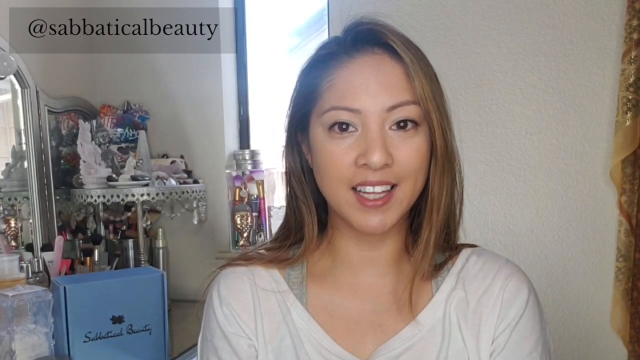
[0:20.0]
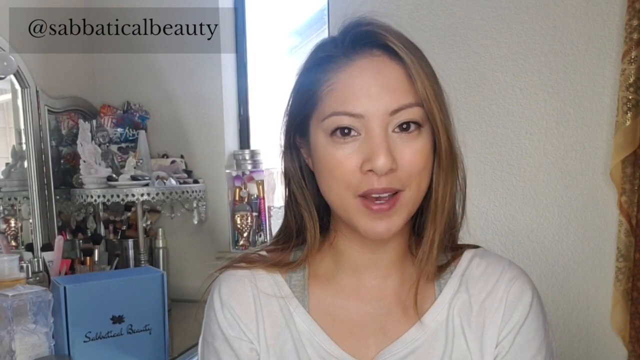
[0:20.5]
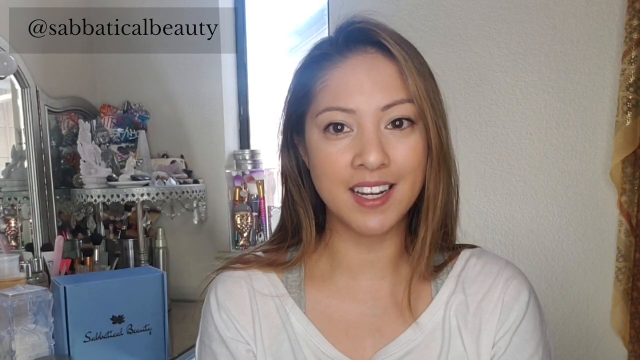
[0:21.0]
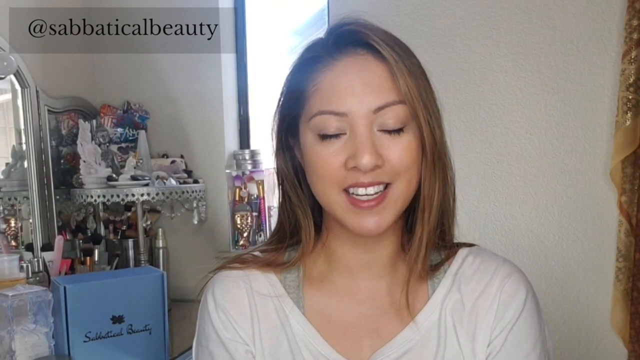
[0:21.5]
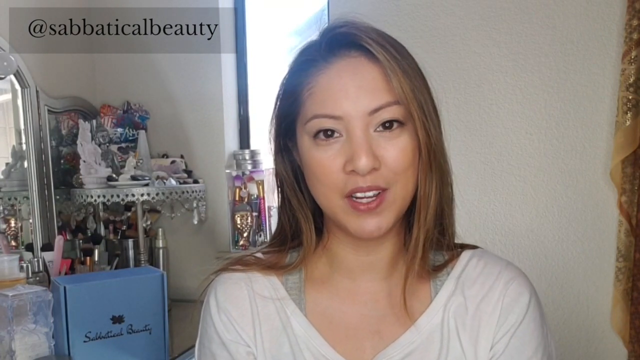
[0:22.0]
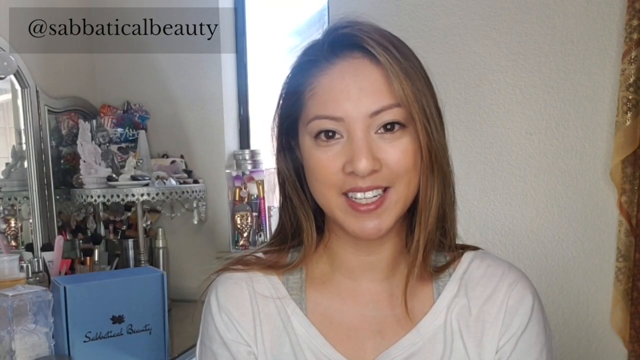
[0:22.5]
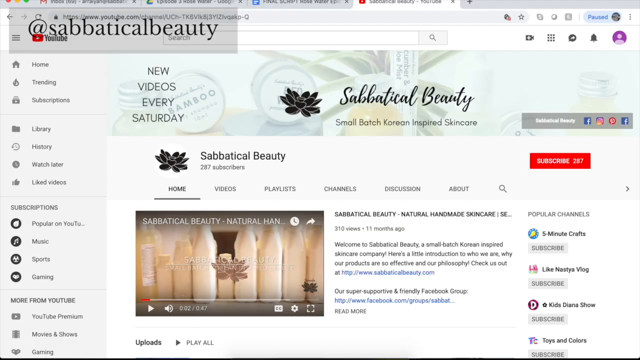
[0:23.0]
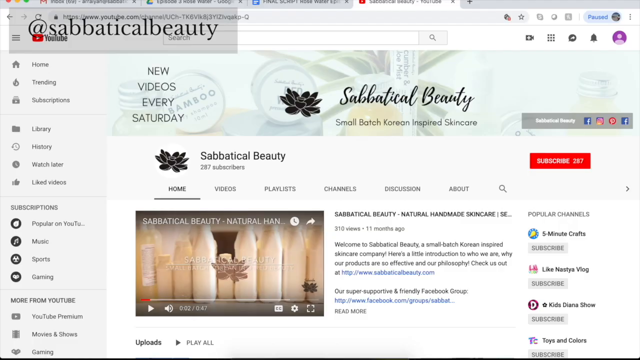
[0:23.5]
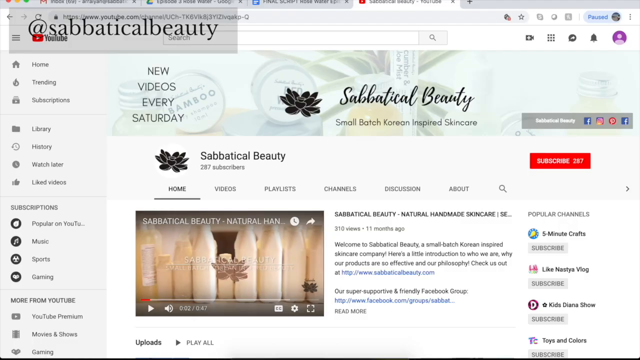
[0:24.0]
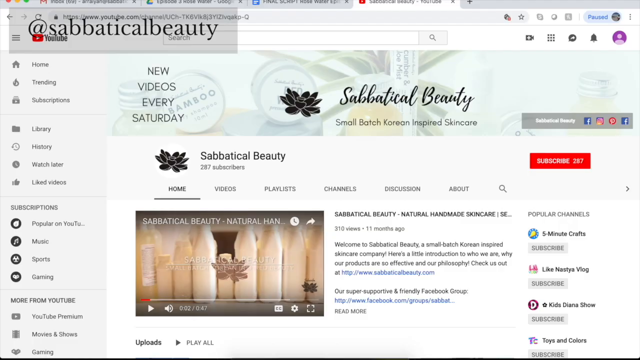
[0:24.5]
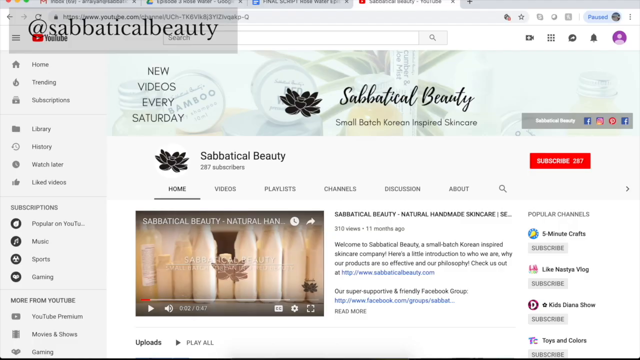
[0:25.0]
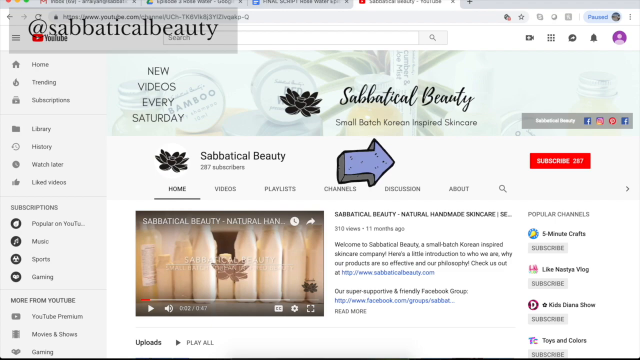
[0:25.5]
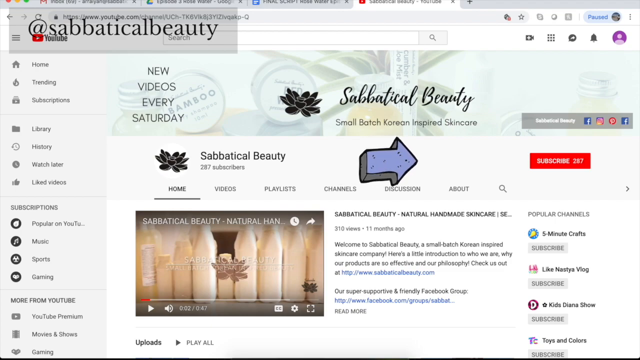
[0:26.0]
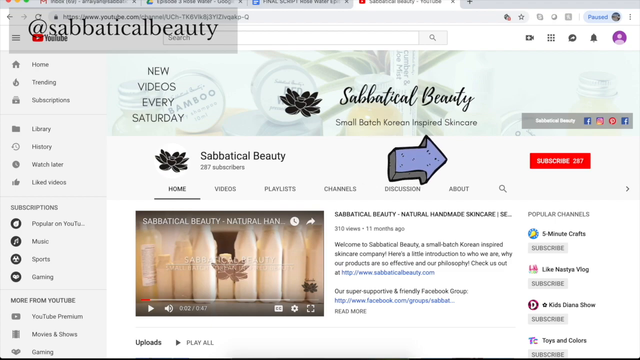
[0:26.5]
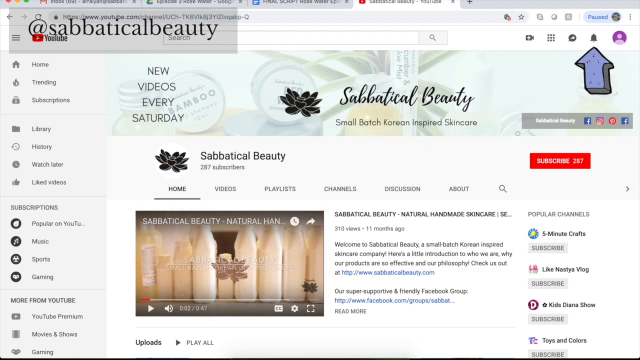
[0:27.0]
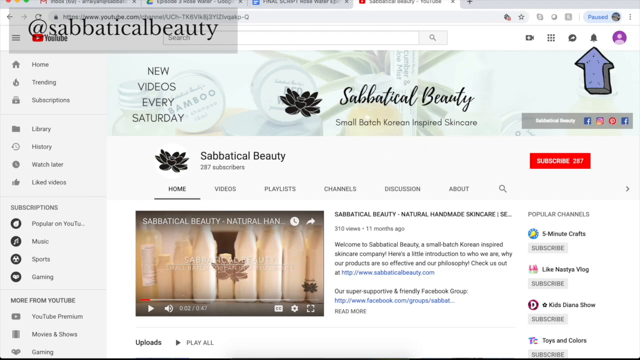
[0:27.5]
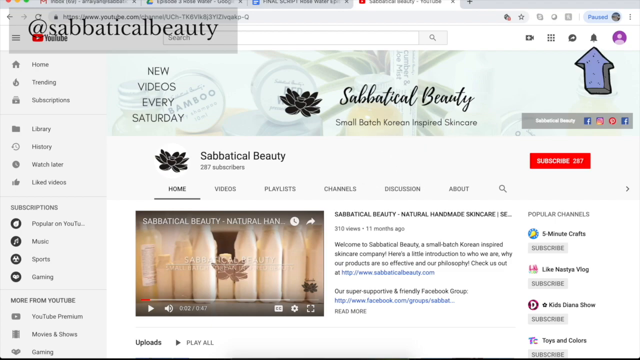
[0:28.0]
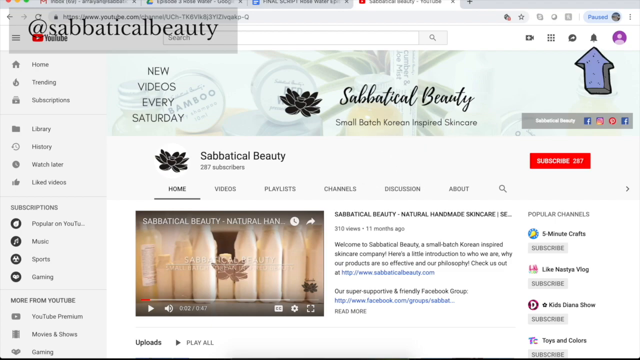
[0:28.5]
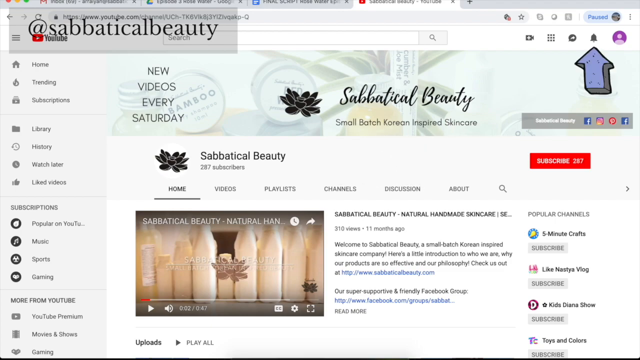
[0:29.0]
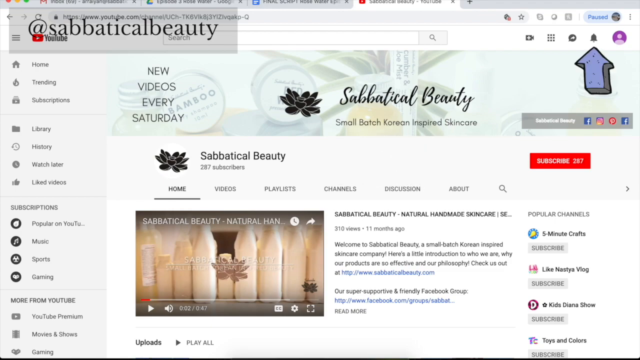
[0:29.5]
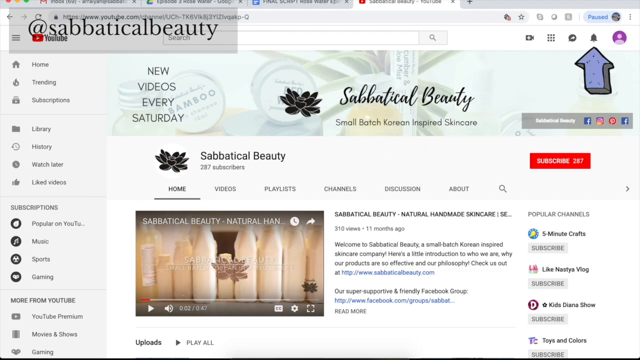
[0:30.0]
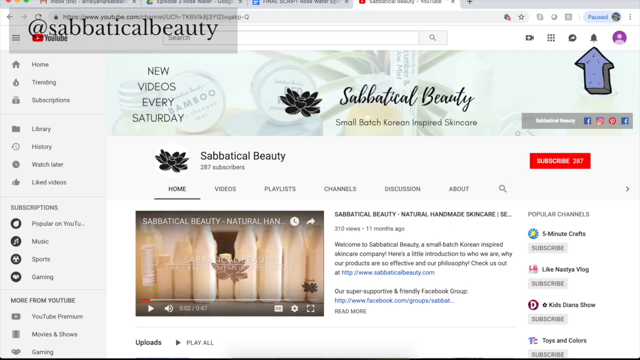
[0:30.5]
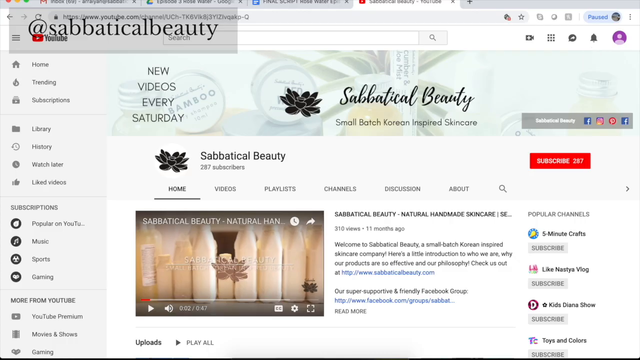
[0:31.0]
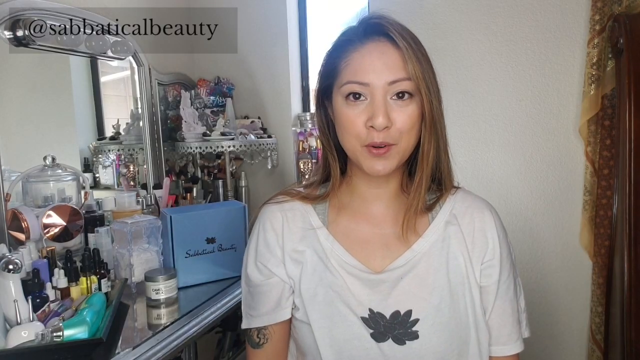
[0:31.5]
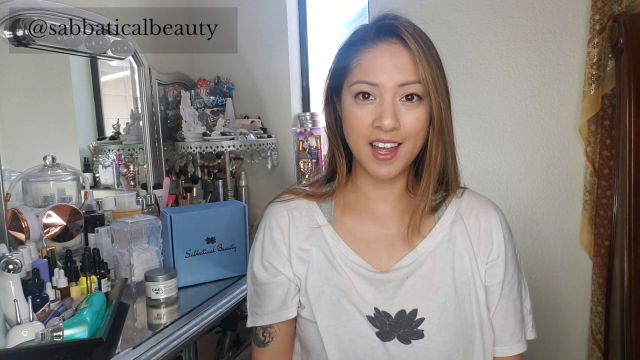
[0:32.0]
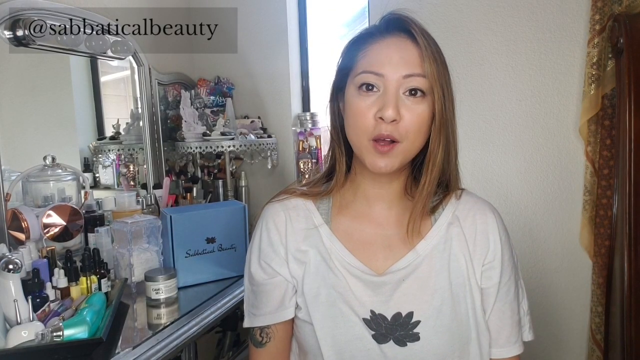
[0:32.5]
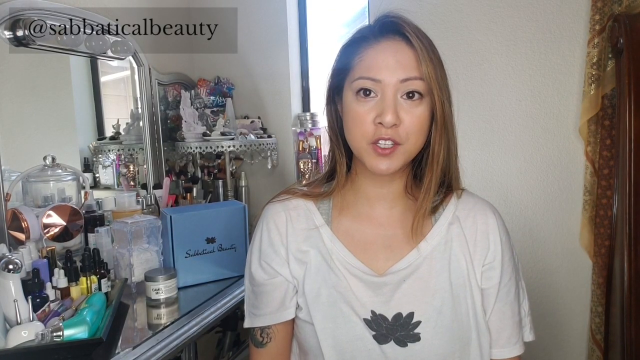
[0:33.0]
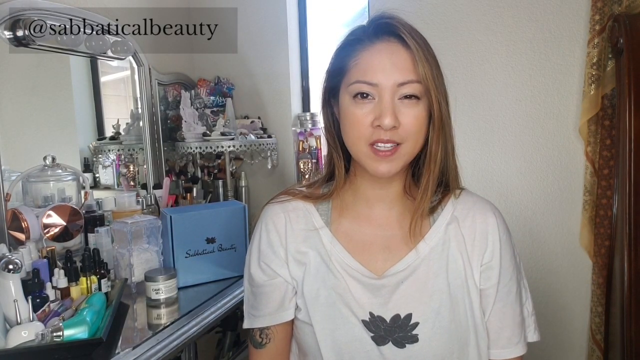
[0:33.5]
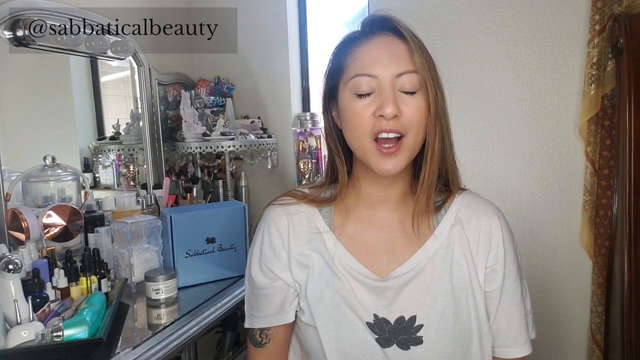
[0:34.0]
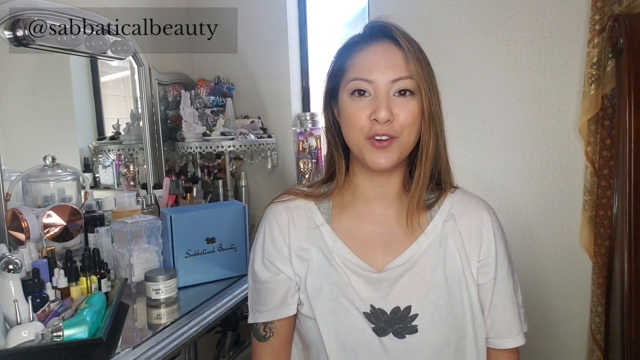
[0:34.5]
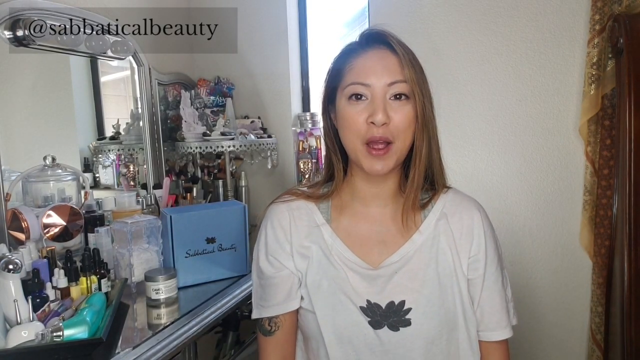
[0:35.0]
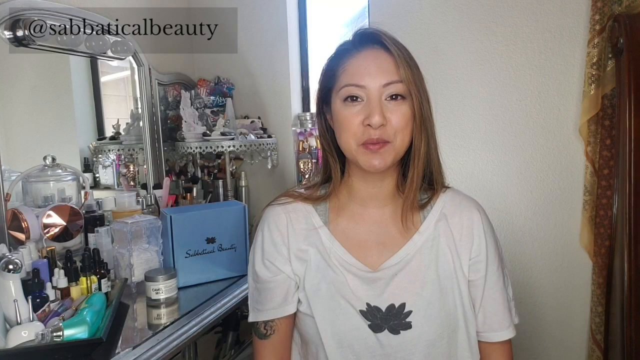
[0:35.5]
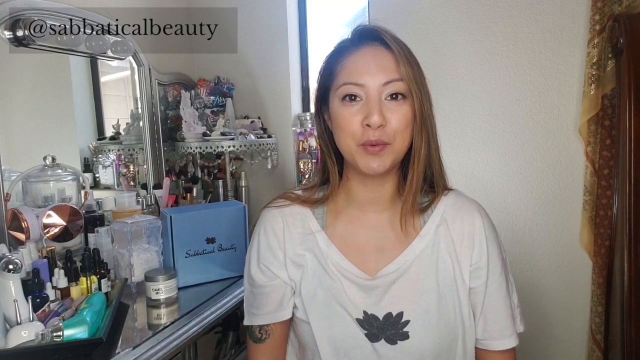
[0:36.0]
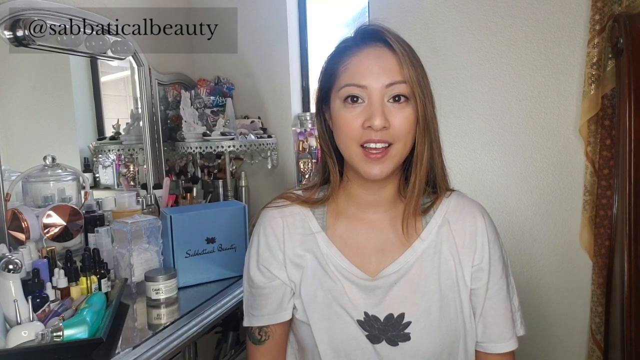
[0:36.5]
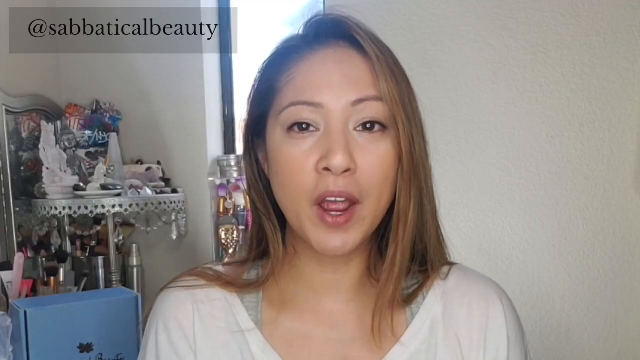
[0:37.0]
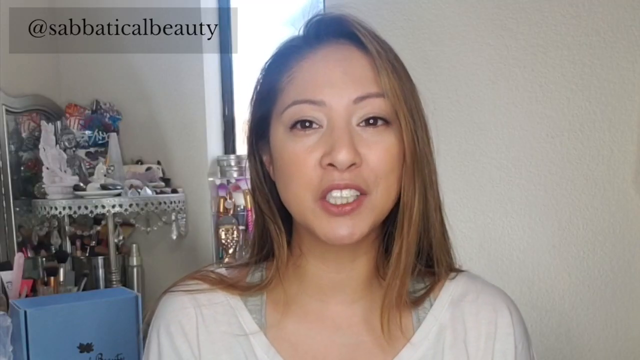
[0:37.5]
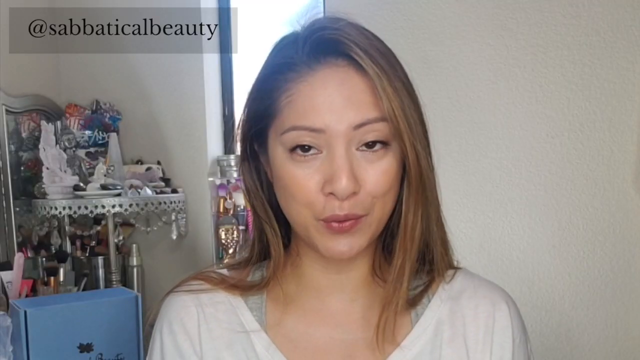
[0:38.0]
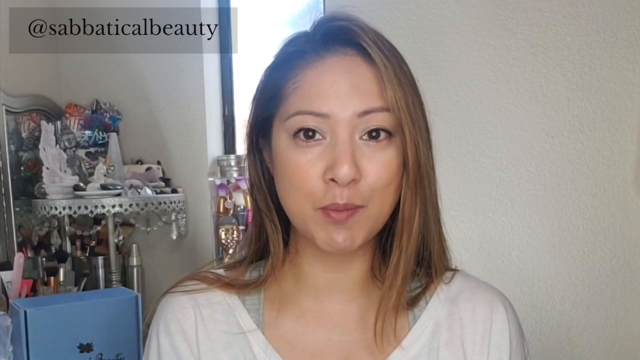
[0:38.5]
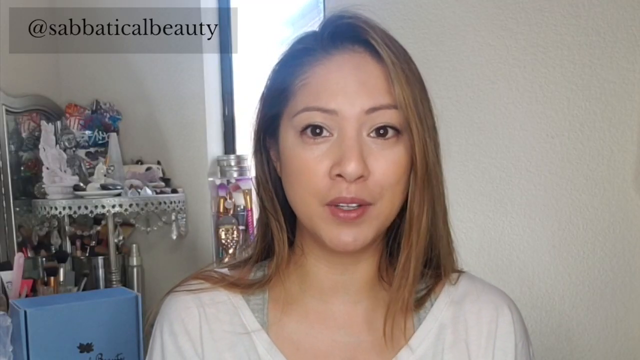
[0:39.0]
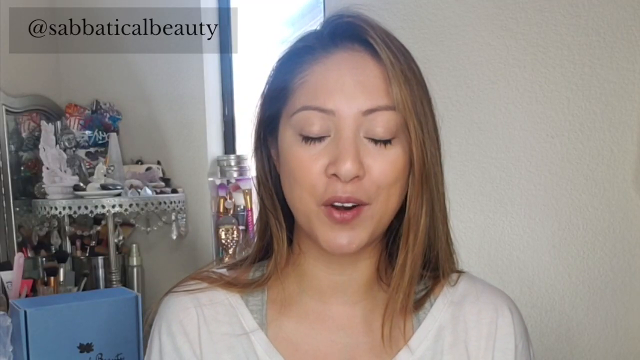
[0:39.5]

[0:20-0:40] The woman shows the website of the company she is advertising. The website has a blue-grayish color and a flower, and shows that new videos are uploaded every Saturday. It also shows a recently uploaded video, and an error appears. Behind the woman, different types of herbs are visible in the background.